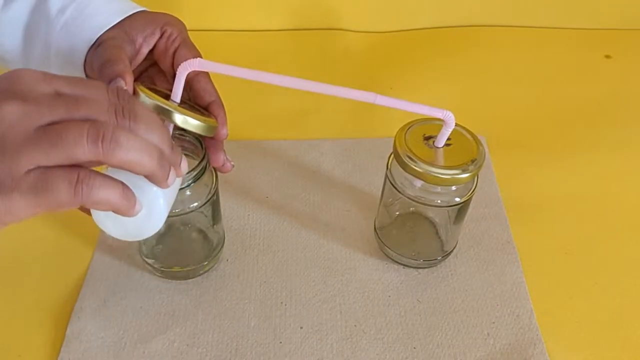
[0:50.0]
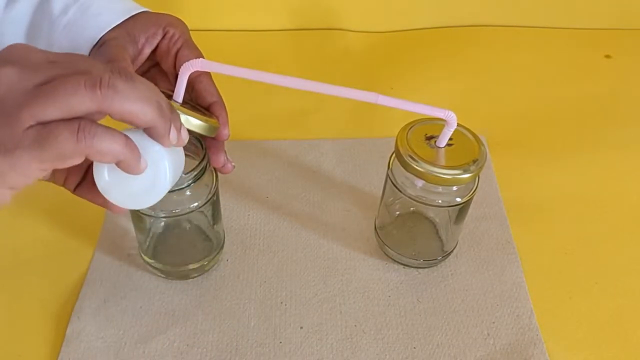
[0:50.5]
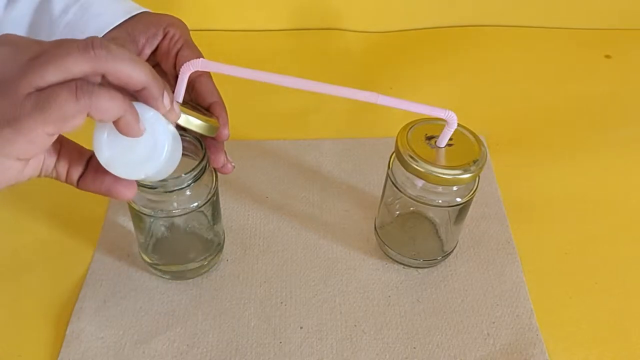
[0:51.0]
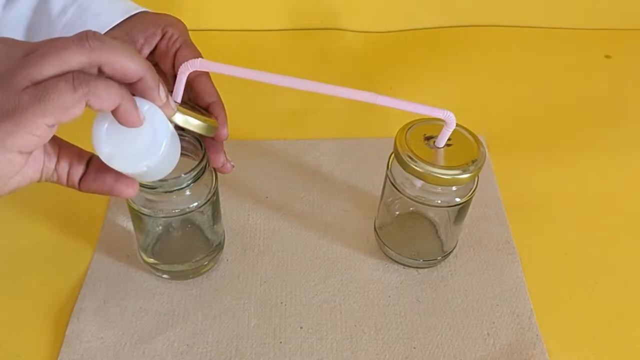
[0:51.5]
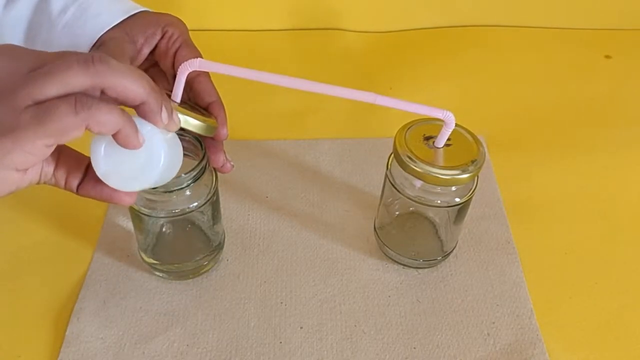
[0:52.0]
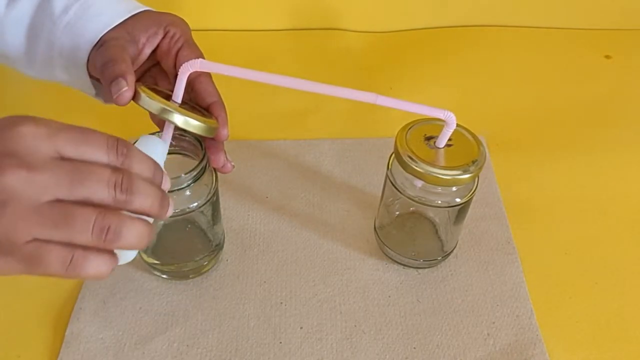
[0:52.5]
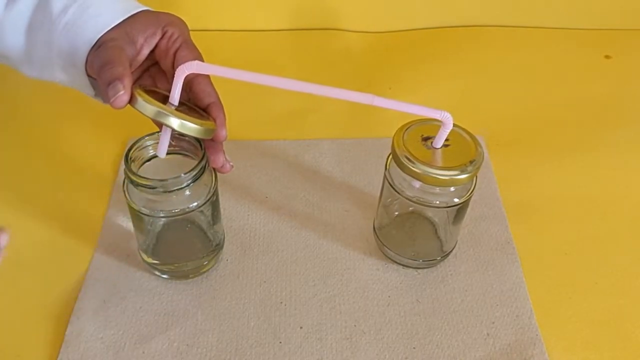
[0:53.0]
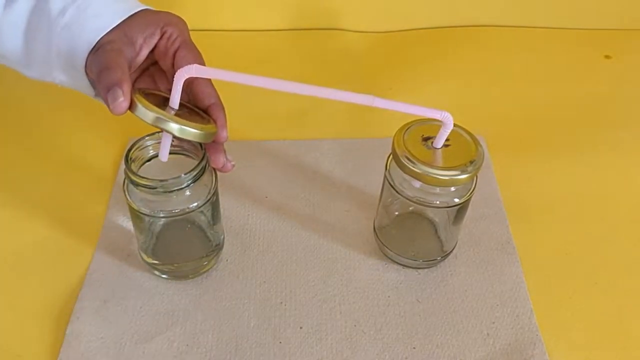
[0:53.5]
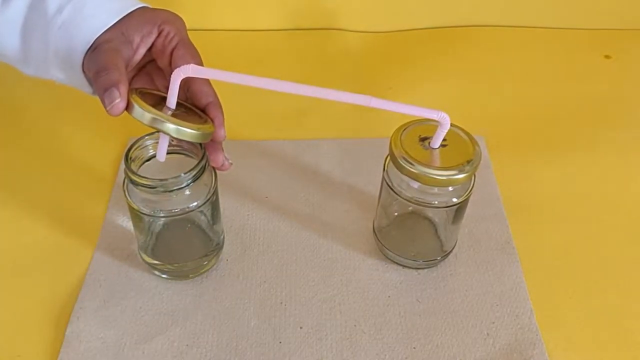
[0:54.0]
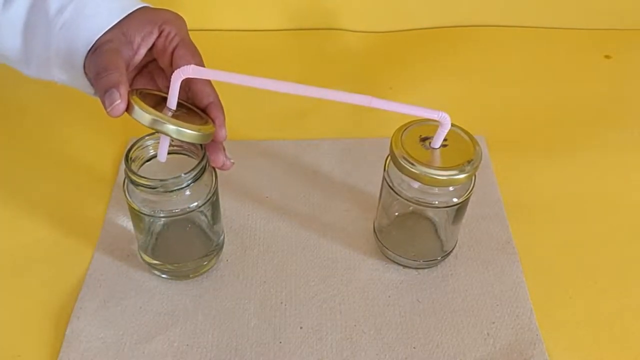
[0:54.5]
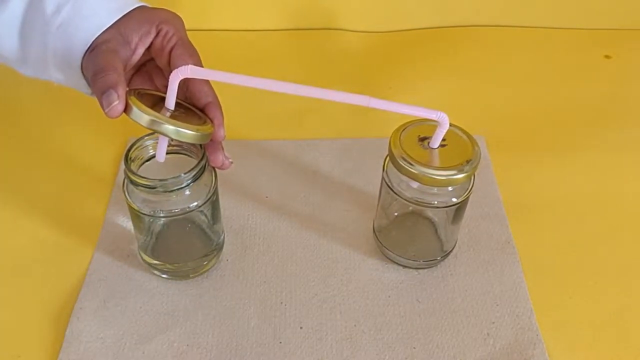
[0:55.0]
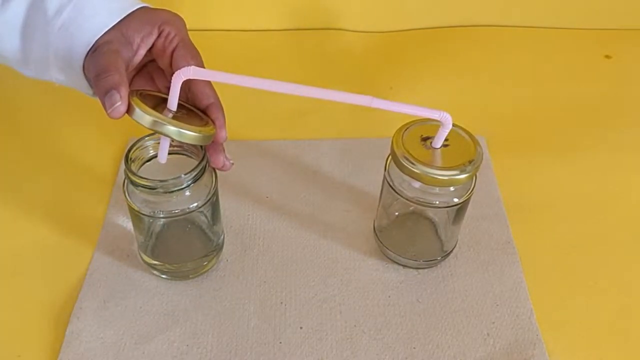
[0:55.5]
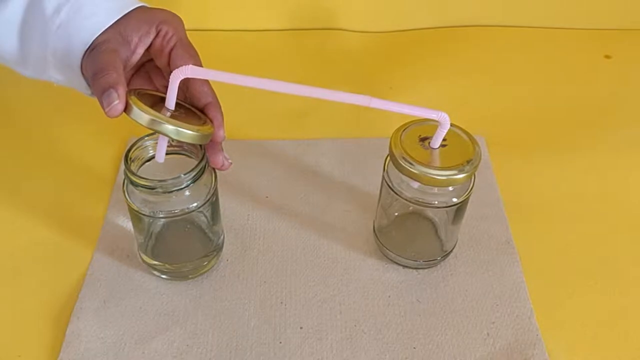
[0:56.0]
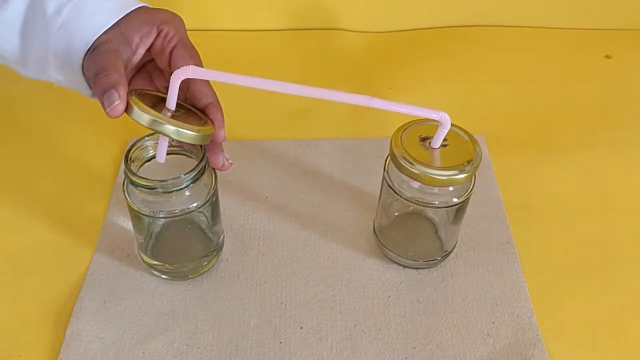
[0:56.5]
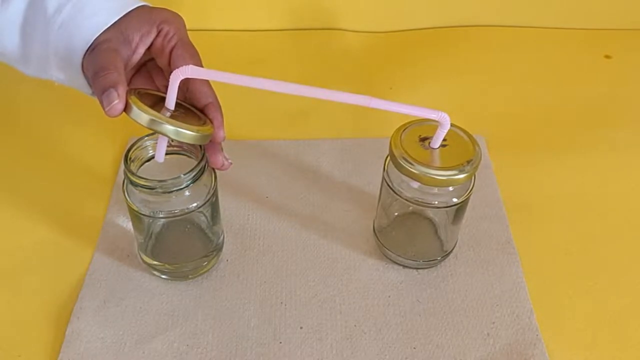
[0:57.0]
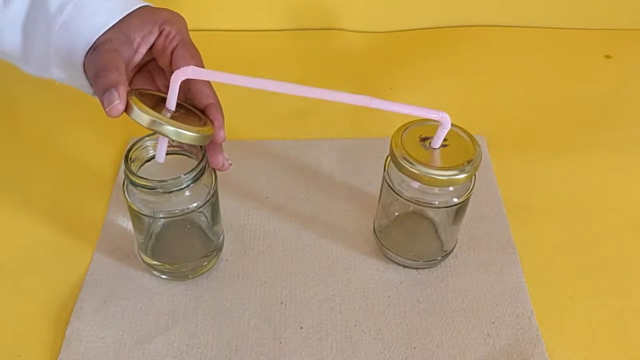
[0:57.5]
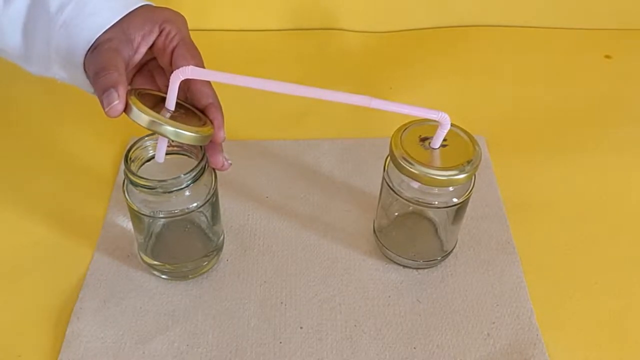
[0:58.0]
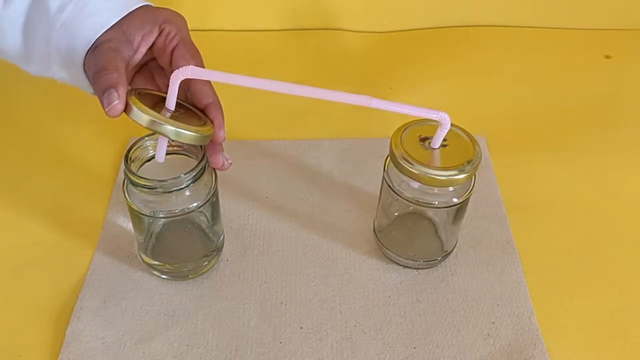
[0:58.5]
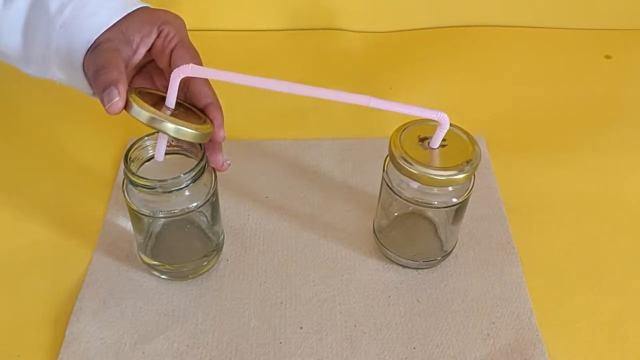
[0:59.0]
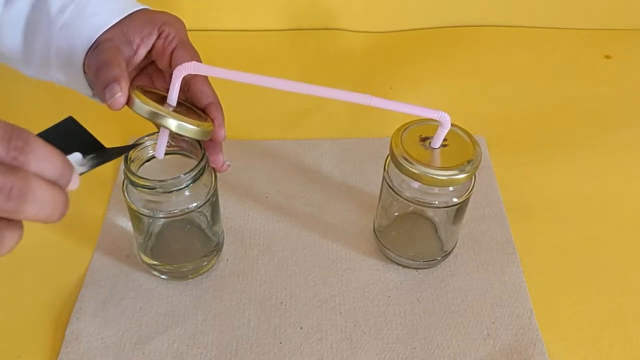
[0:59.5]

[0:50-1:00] The scientist holding the mason jars opens the jar on the left-hand side and pours vinegar into it. They then appear to take the baking soda and are about to pour it in, but the shot ends before they do. The right-hand jar is empty, just a jar of air with a straw sticking out of it leading to the jar that now has vinegar in it.